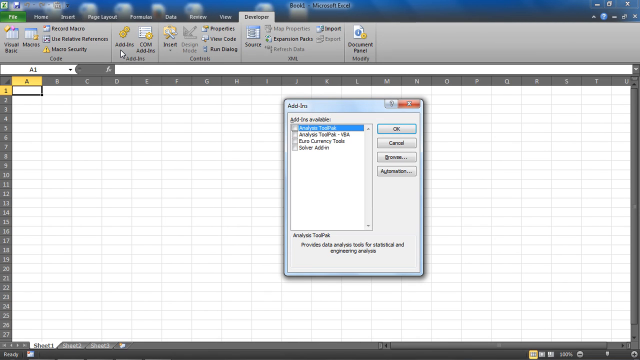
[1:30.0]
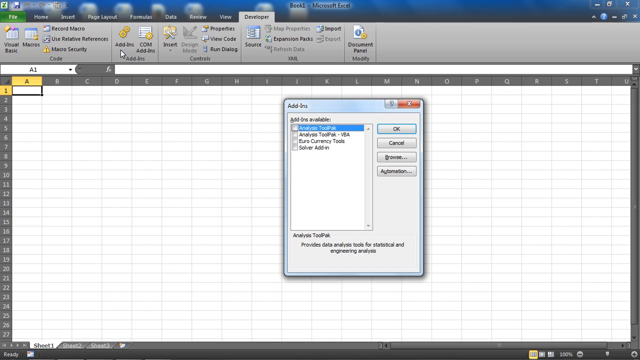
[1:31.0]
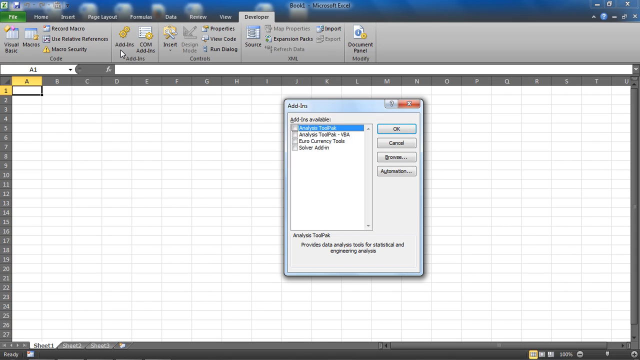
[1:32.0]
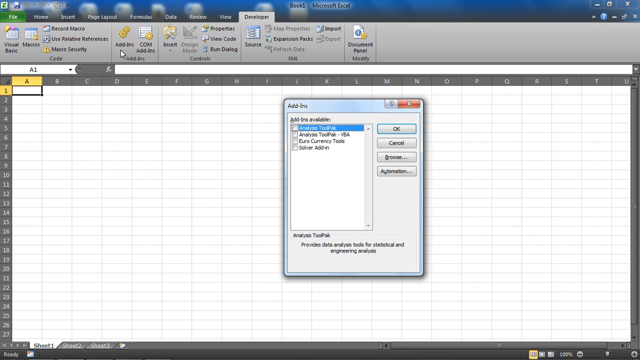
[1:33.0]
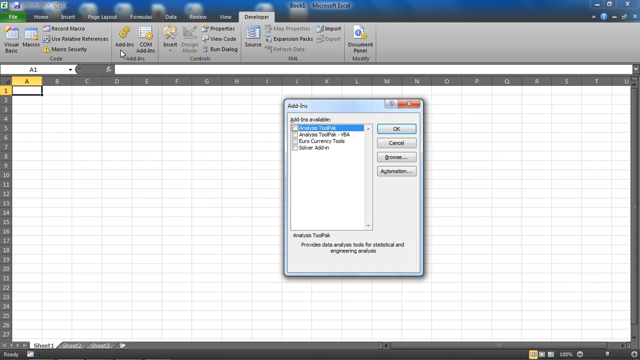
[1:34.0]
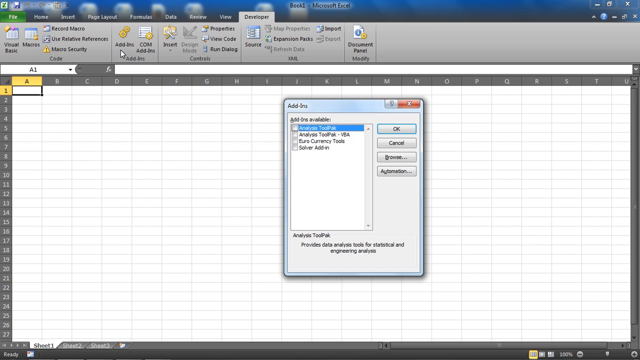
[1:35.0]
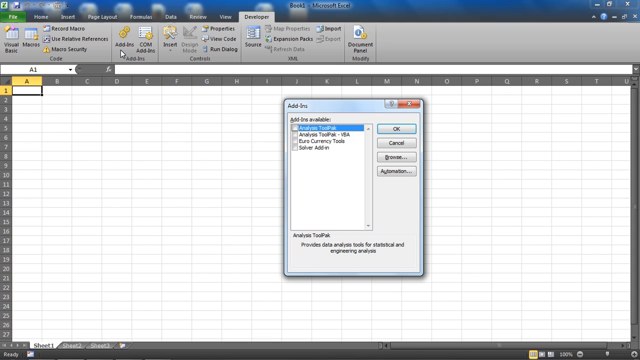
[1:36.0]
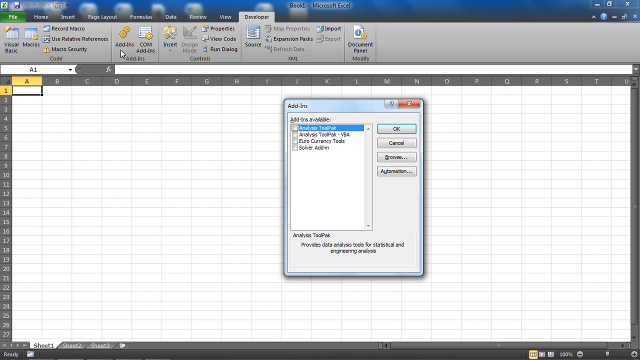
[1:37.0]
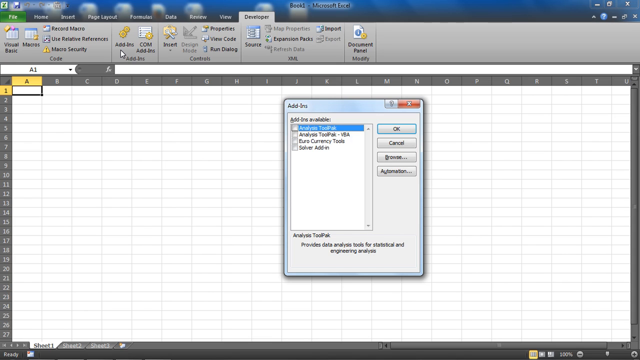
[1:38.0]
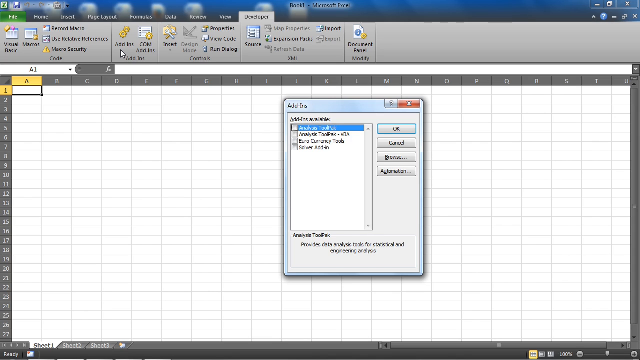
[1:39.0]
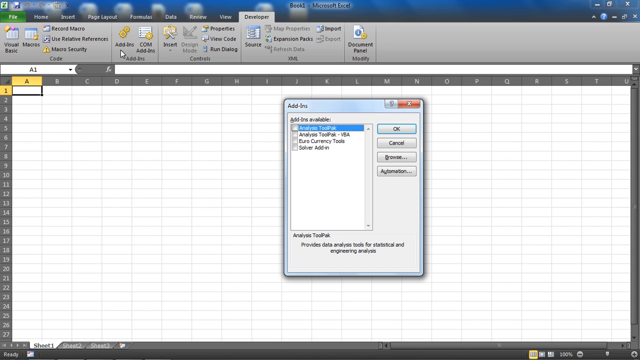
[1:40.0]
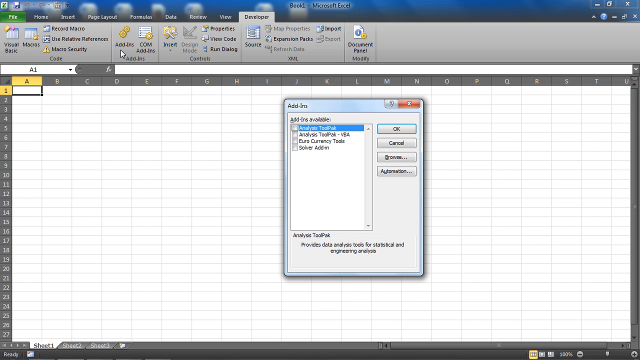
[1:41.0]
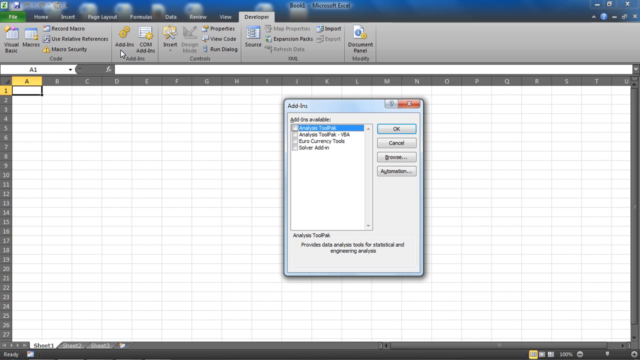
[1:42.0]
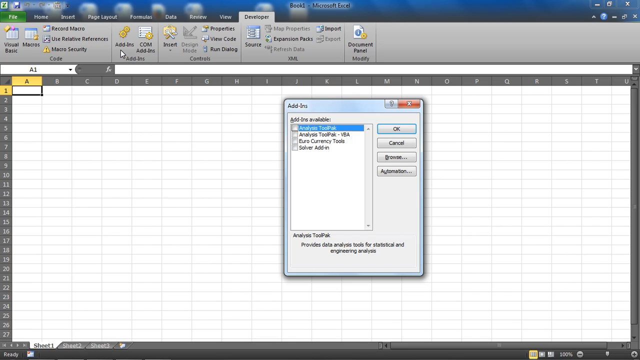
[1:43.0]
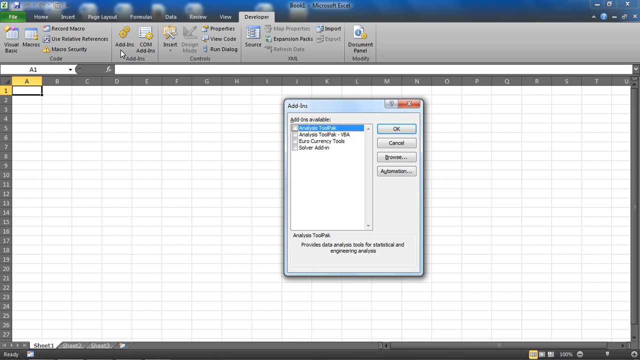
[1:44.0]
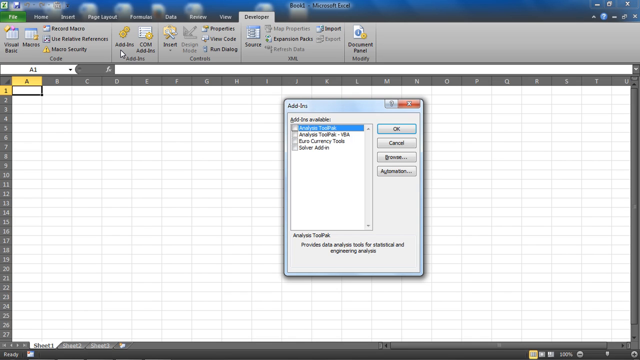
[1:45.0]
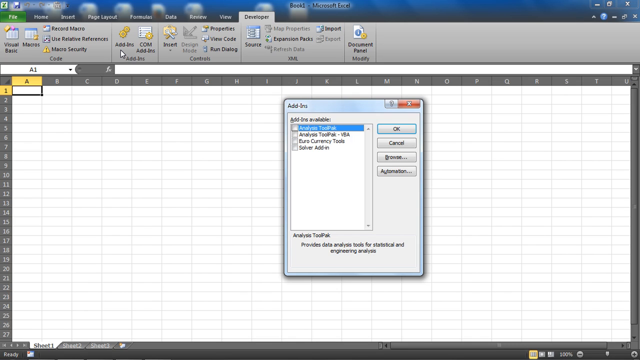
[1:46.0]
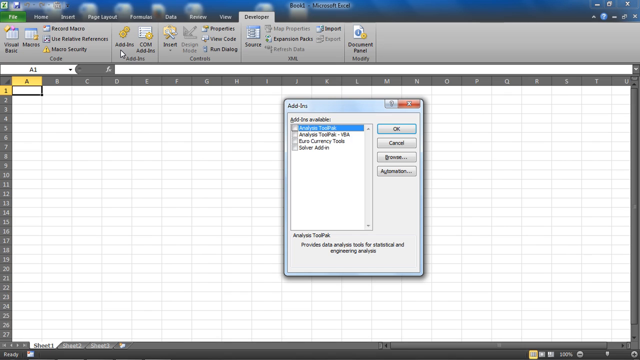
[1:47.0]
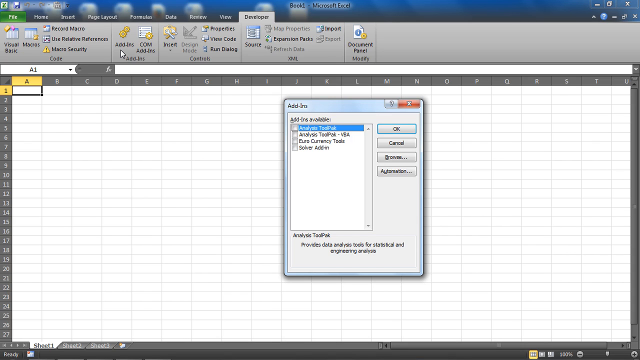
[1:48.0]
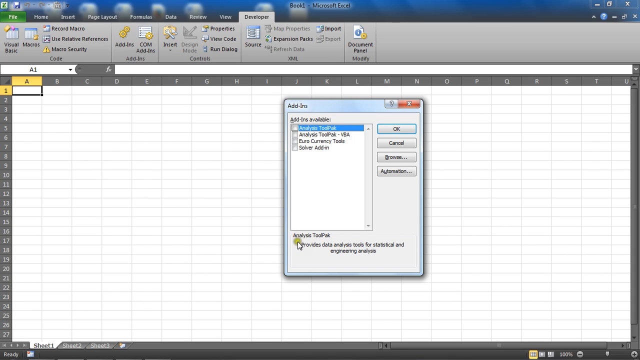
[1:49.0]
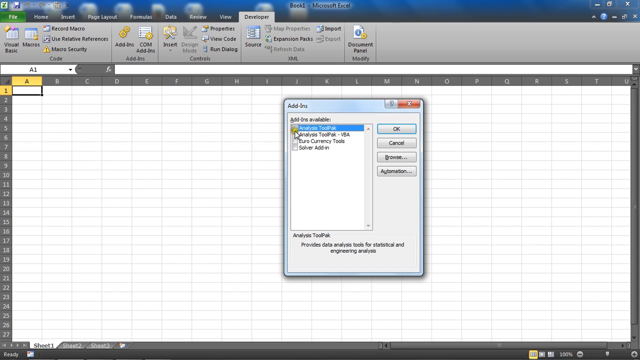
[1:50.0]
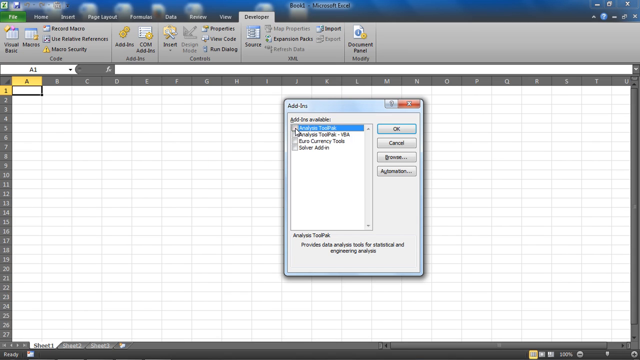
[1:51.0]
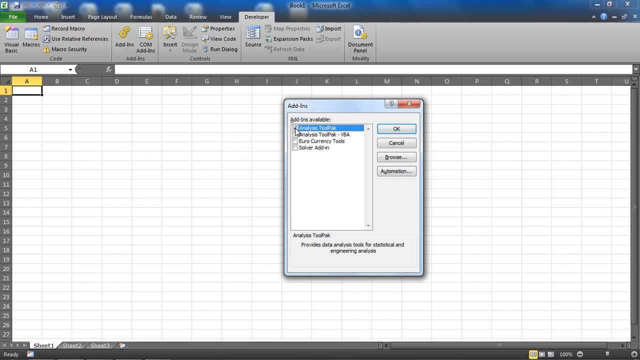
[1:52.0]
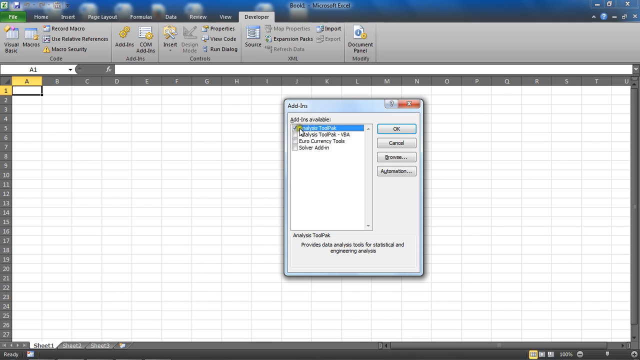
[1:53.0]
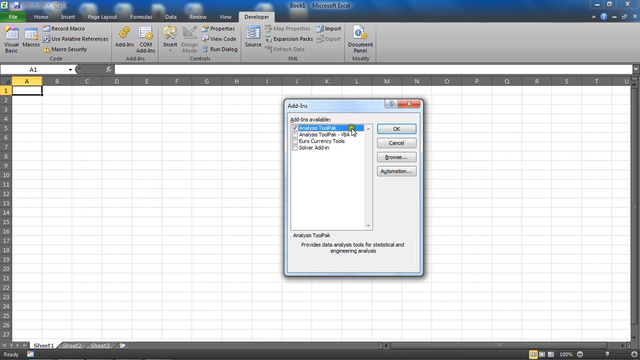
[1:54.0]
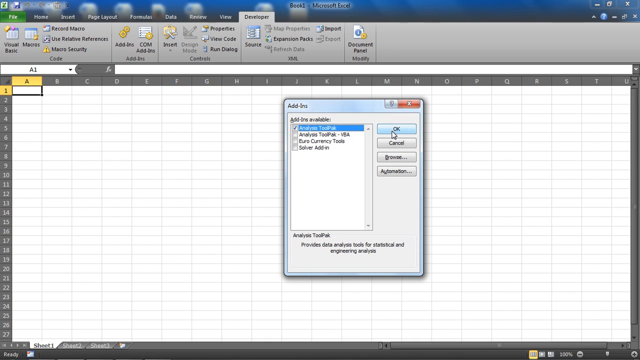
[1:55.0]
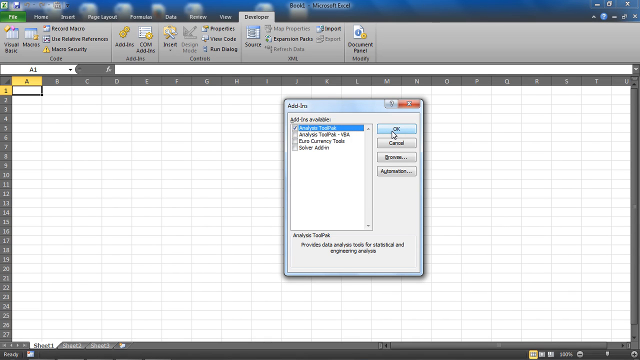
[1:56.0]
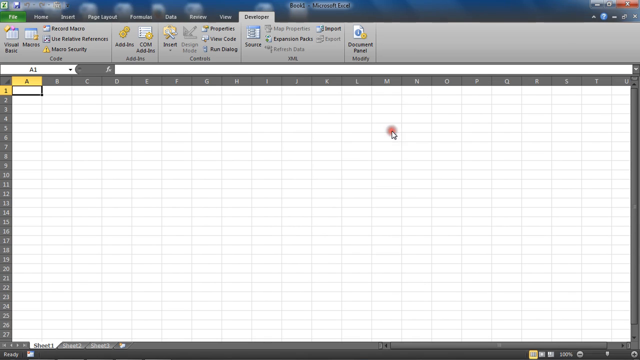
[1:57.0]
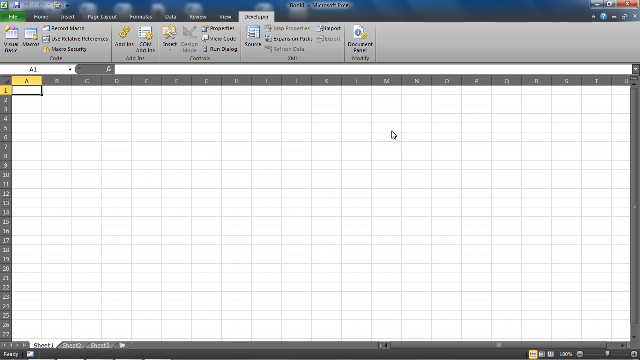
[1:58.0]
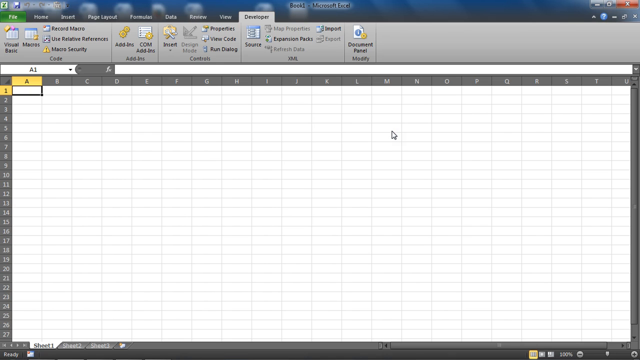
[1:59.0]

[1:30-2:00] The Add-ins window is in the middle of the screen, lying on top of the Excel cells, and there is also an Add-ins button and graphic in the toolbar at the top. The cursor is up near the Add-ins section of the toolbar rather than in the window. Finally the cursor moves over toward the open window, where the top choice is highlighted in blue but not clicked. It zips down and clicks that top choice, and a check mark now appears inside it. It then zips to the right and clicks the OK button; a red flash circle appears and the whole window disappears. The cursor turns back into a fat cross. Whenever the cursor is over the Excel cells it is a cross; otherwise it is a white arrow, slightly angled with its point heading toward the top left. Nothing else has changed apart from the window disappearing.